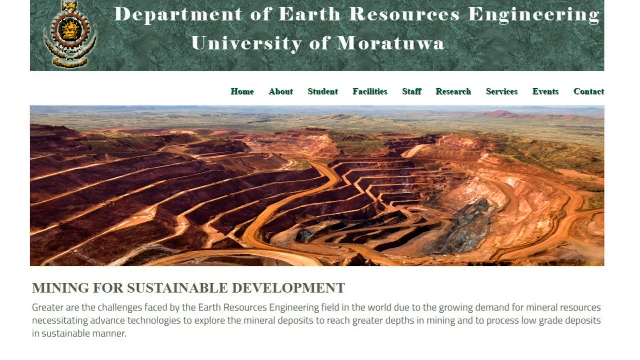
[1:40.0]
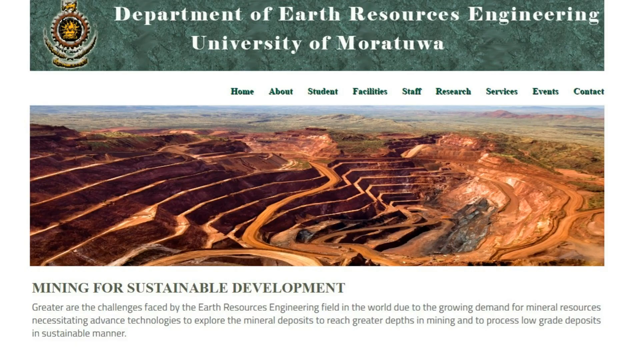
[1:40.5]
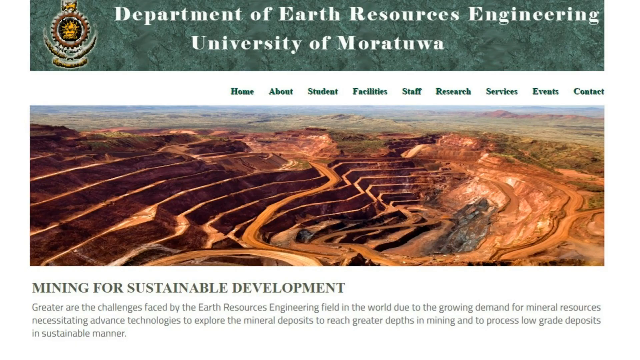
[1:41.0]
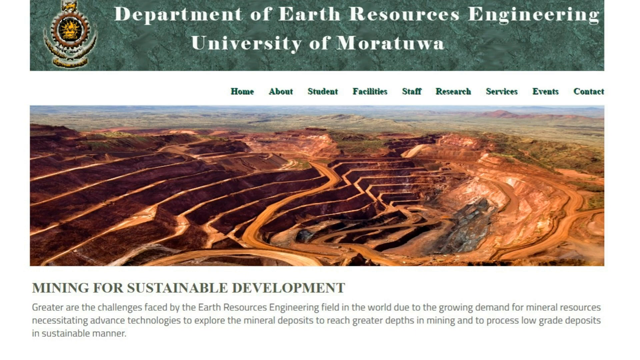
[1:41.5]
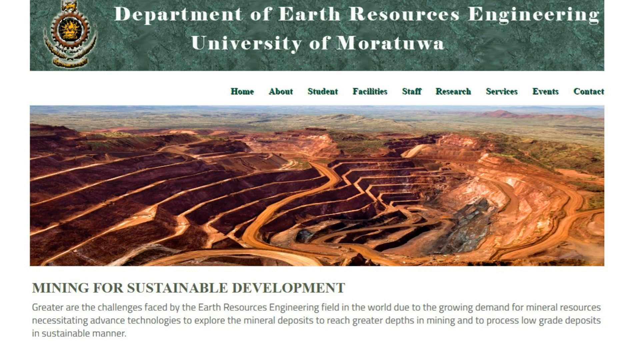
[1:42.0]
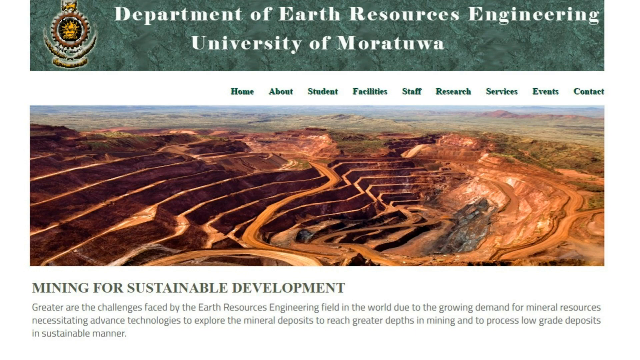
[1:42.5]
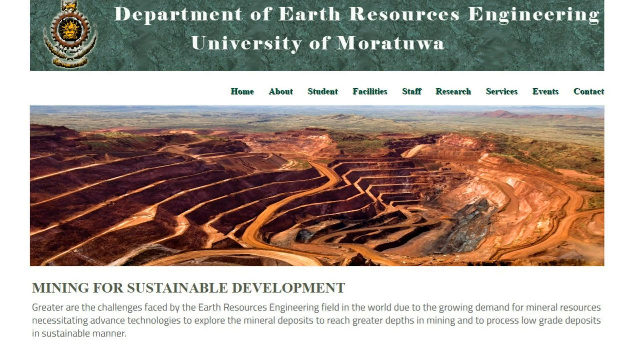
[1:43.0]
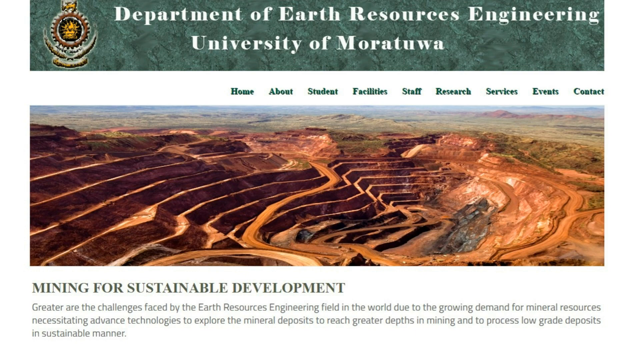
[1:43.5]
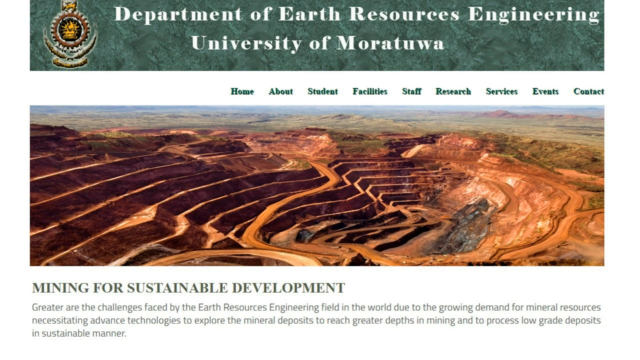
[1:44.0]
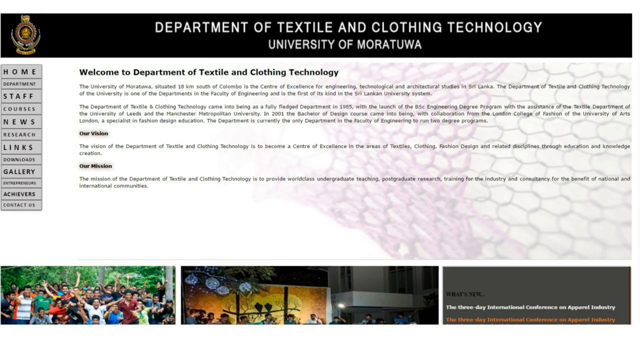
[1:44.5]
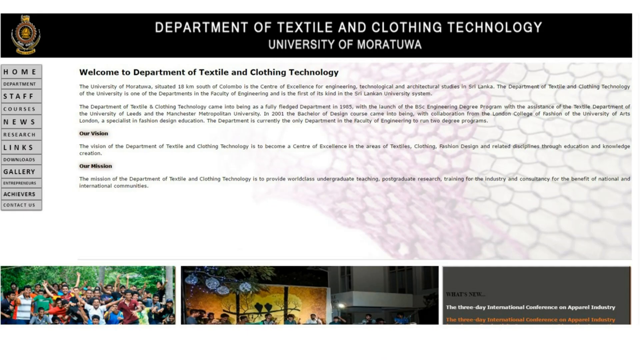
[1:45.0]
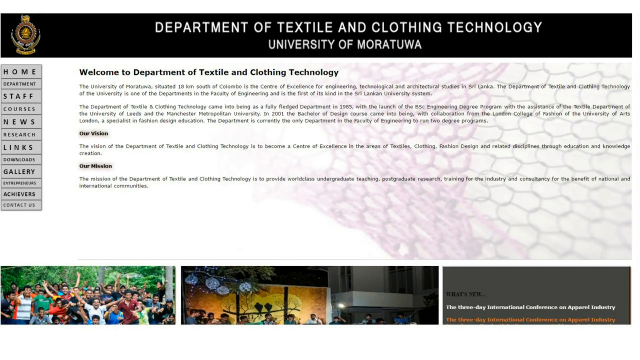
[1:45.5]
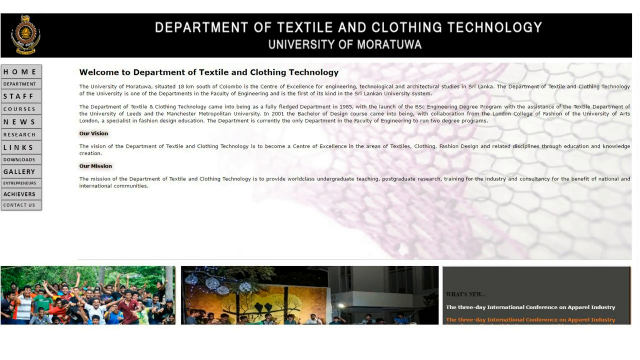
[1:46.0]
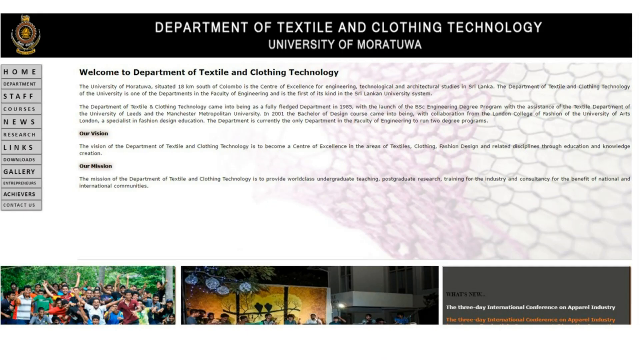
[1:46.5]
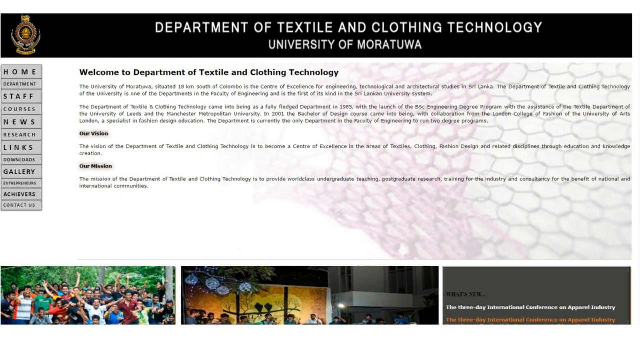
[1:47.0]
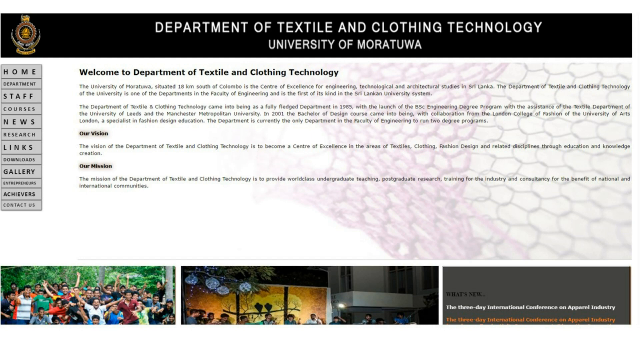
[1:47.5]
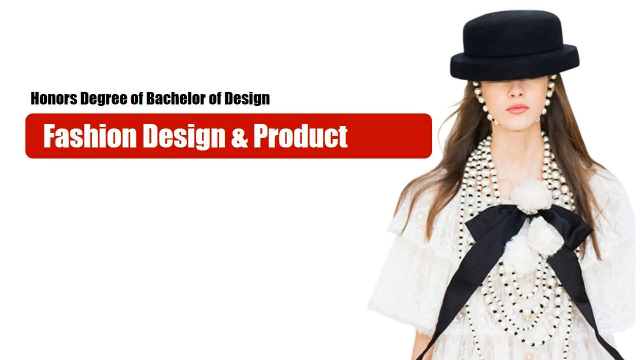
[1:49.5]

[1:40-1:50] A website for the Department of Earth Resource Engineering of the same university appears. To the left is a crest that looks like bullhorns with a rusted-looking spiky thing and a yellow mask with spikes coming out of it. Below is a white bar with clickable menu items: "home" in green, then "about," "student," "facilities," "staff," "research," "services," "events" and "contact." Underneath is an image of a rock formation with many striations, almost like steps going down, with long ridges extending far back. Below that, "mining for sustainable development" is in all caps, also in green. There is a green background where "Department of Earth" appears in white. Then a Department of Textile page appears, in reverse print, with the same crest on the left at the top. Next is a fashion design image of a woman in a black hat holding necklaces, with a black bow tie in front of her; it looks like the 80s, and she has a white shirt on her dress. To the left, in a red box with white text, it says "honors degree a bachelor of design fashion design a product."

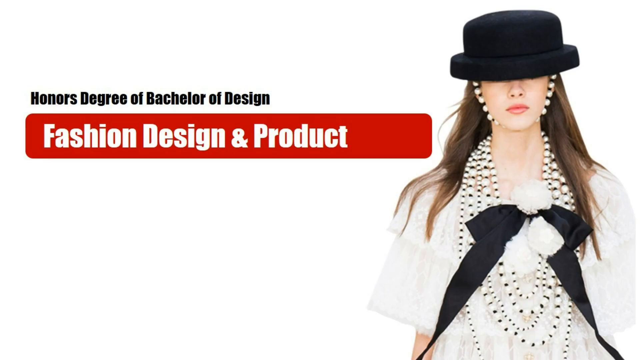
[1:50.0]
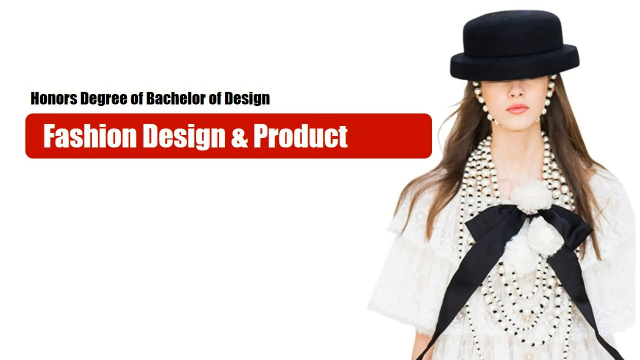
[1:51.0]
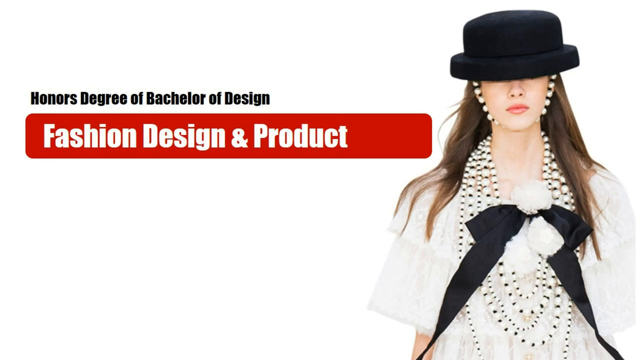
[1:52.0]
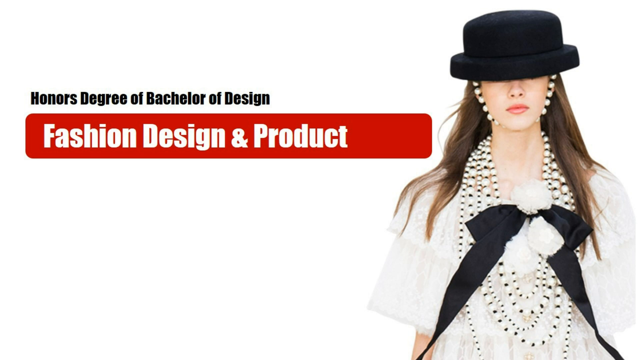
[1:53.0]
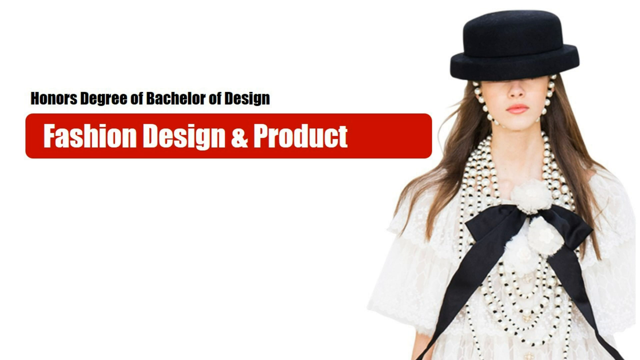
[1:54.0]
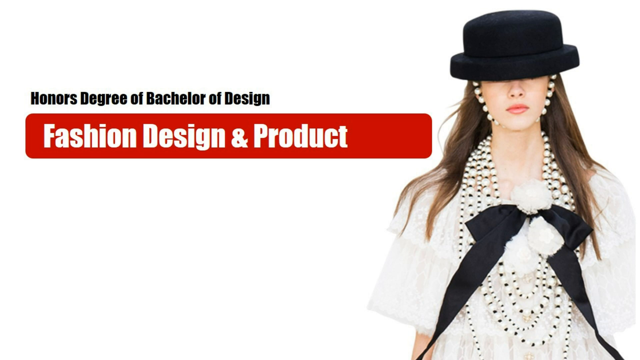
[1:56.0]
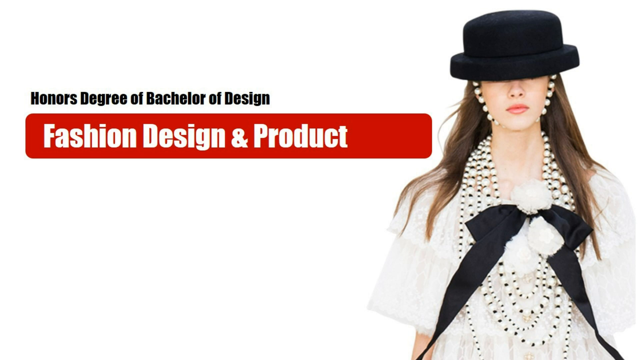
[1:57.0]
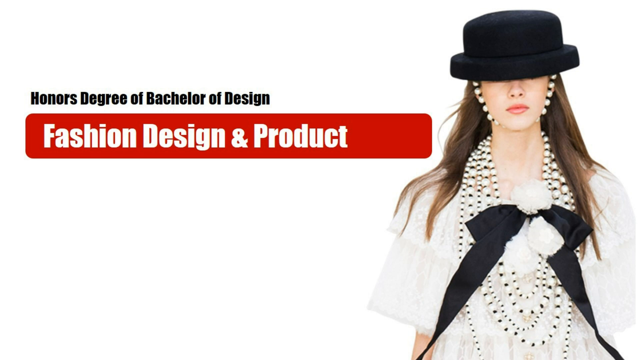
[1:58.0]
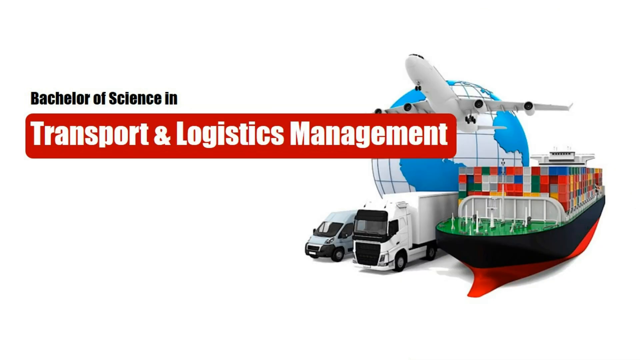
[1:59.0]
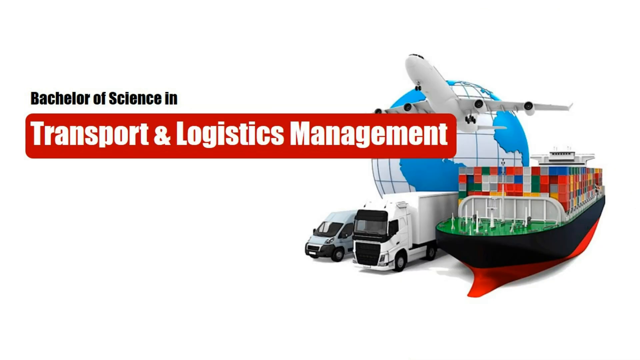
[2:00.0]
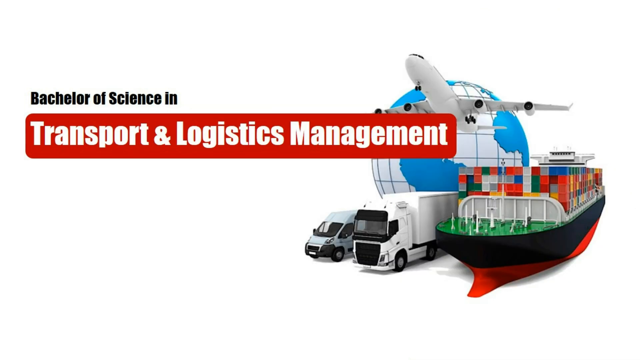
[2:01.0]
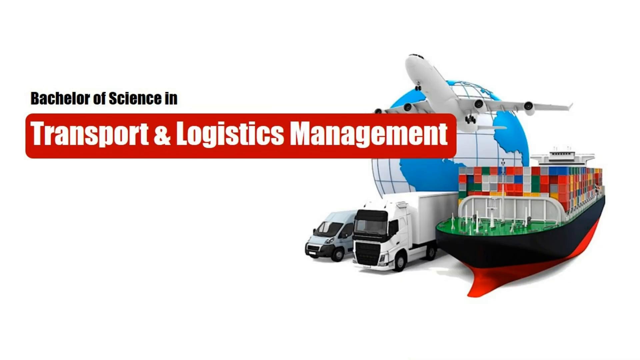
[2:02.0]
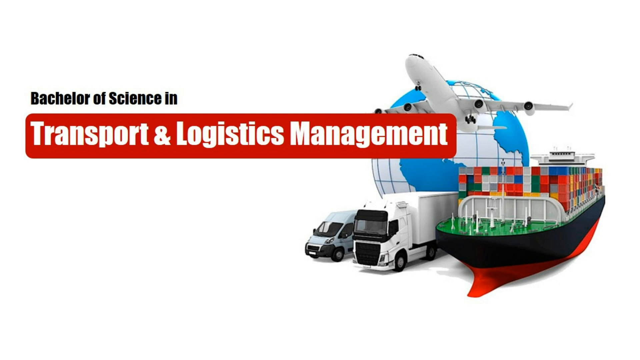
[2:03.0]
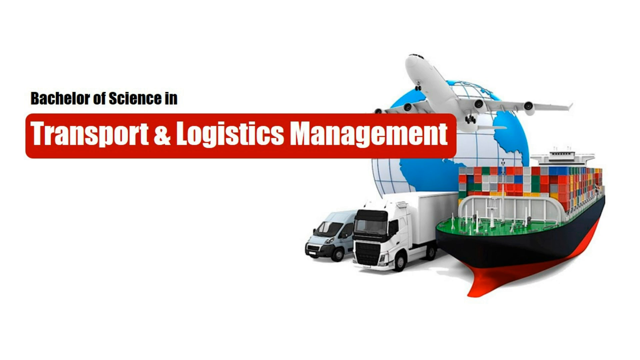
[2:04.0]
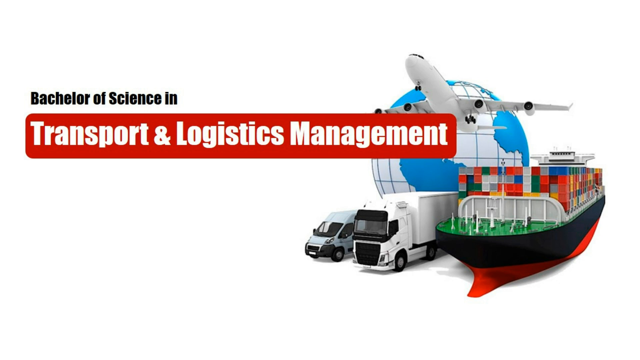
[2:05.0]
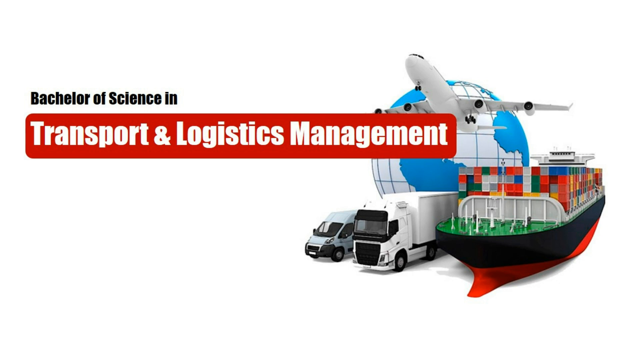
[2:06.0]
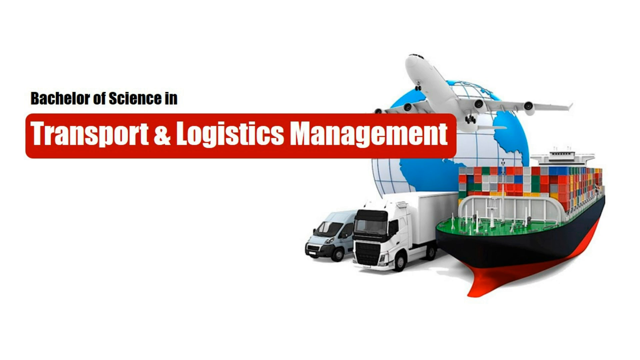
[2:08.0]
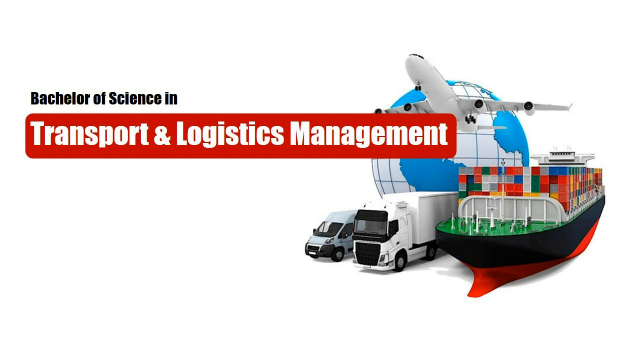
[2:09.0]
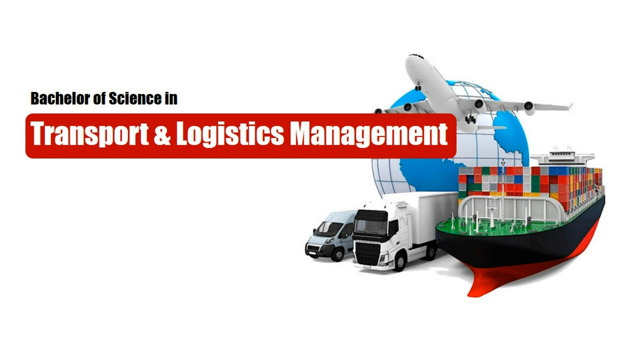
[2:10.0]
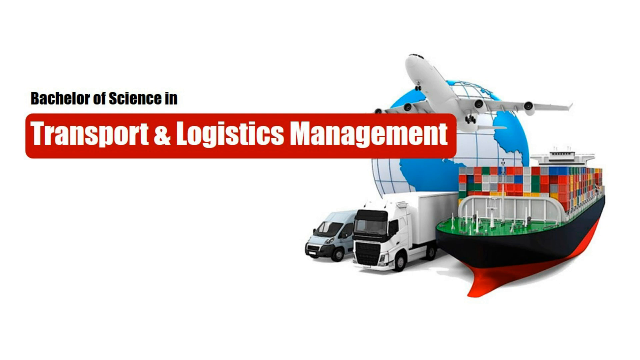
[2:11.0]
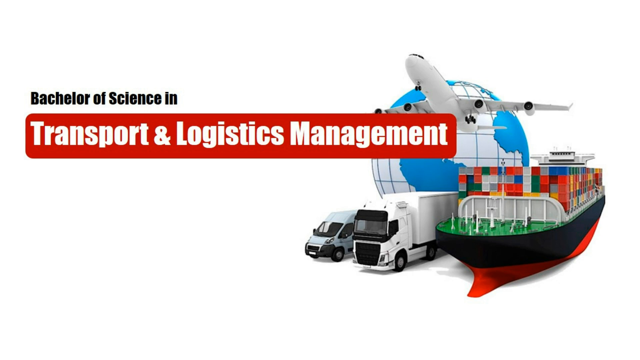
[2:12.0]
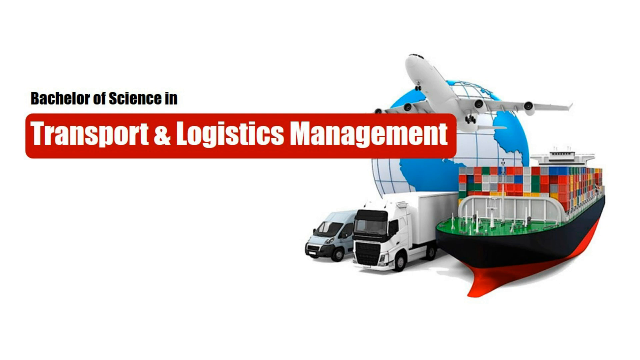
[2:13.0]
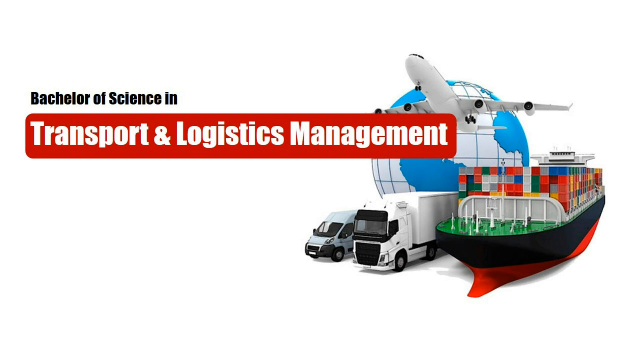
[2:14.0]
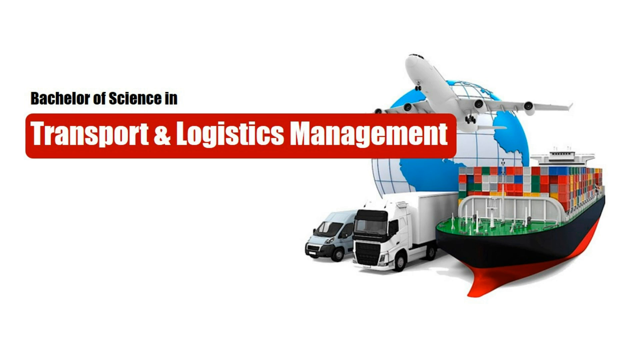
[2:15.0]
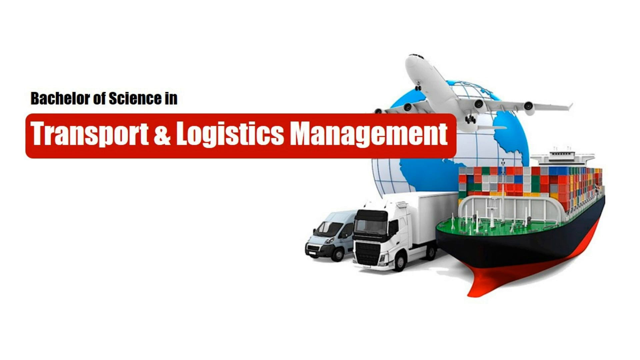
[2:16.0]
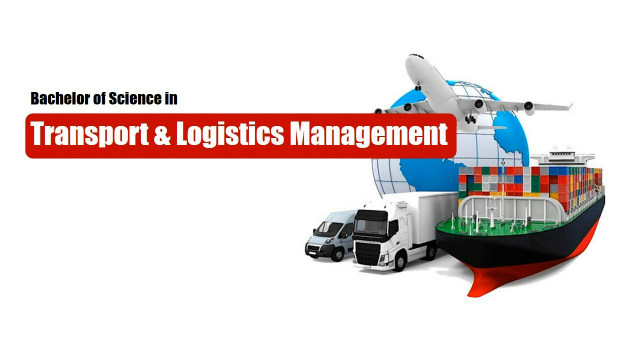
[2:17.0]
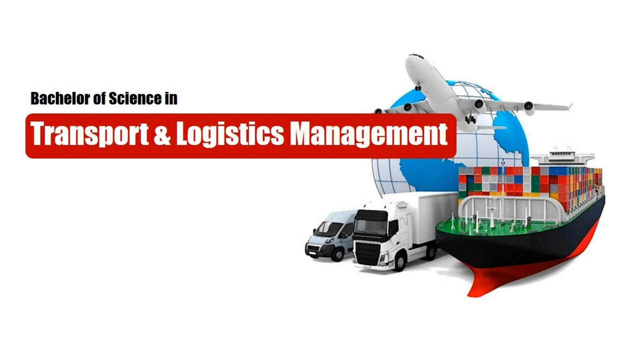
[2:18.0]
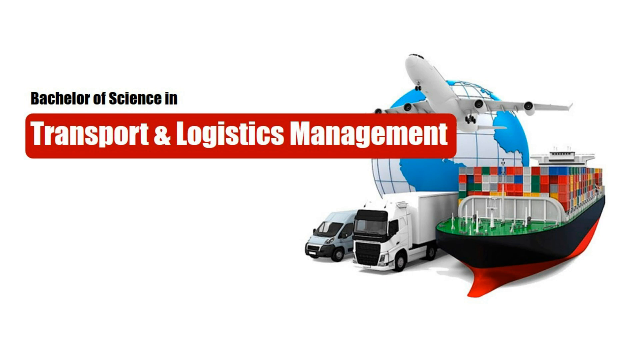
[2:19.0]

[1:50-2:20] The woman's hat comes down over her head so the top part of her eyes cannot be seen. A black and white beaded-looking thing is holding her hat on. The hat looks a bit like a top hat but shorter, like Charlie Chaplin's. She has medium brown hair a bit longer than shoulder length. She wears four or five strands of black and white sequins, almost like gemstones, either one long strand wrapped around several times or several layers of shorter and longer ones. A really long black ribbon with a few fake white flowers is tied to the front of the necklace. She appears to have puffy, medium-toned lipstick. Next, a white screen shows 3D pictures of a jet taking off, a globe behind it, a carrier ship full of shipping containers in different colors, a van and a white truck. "transport and logistics management" appears in a red box with white writing.